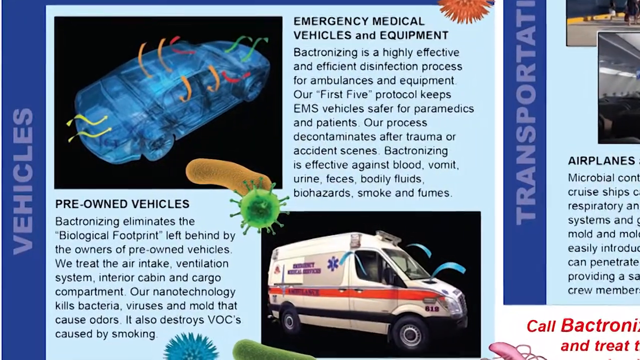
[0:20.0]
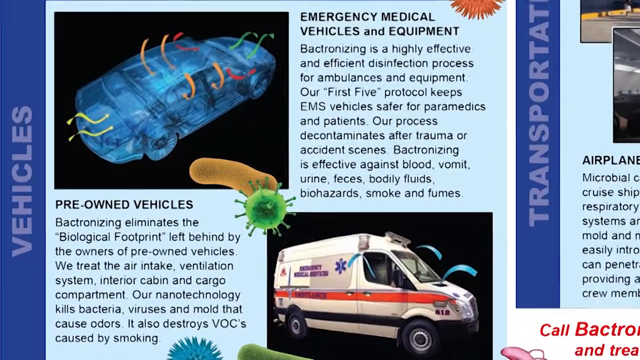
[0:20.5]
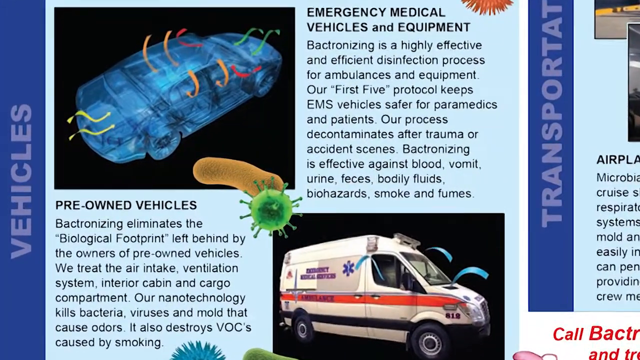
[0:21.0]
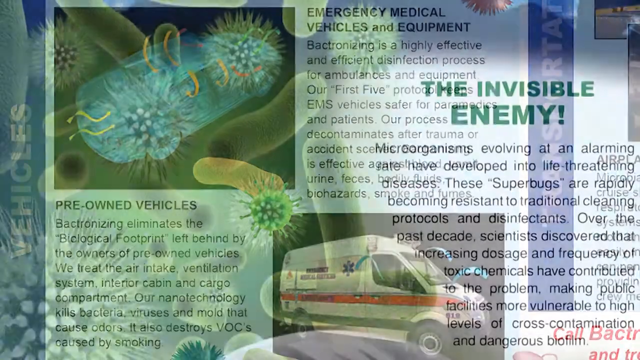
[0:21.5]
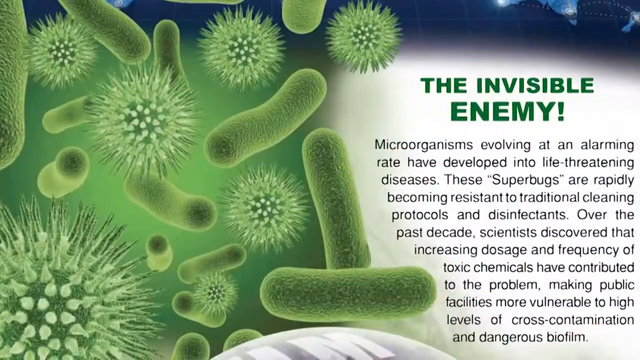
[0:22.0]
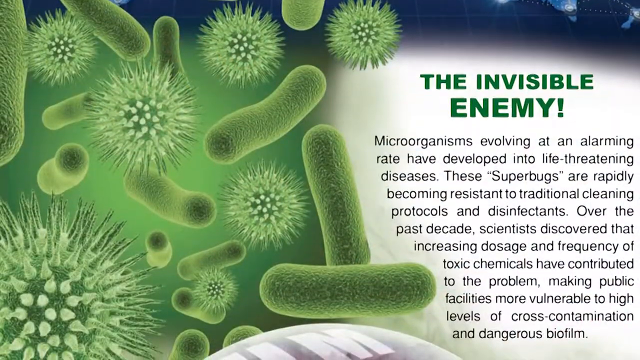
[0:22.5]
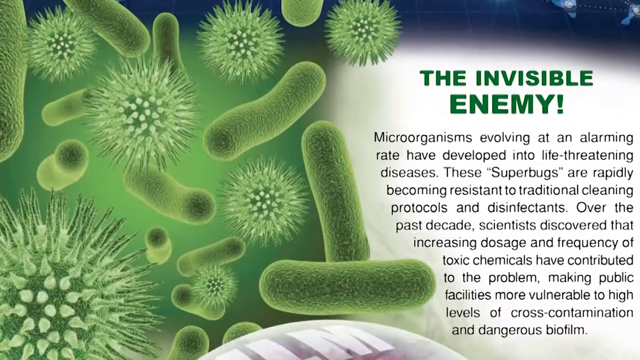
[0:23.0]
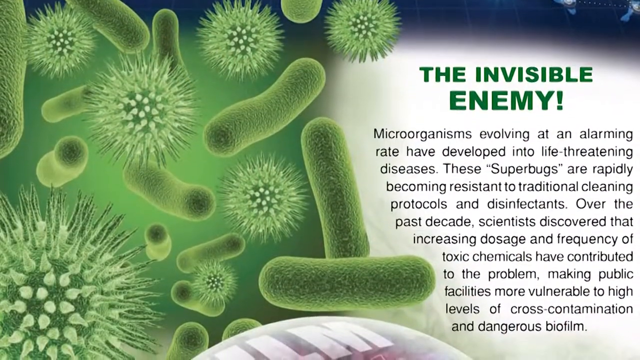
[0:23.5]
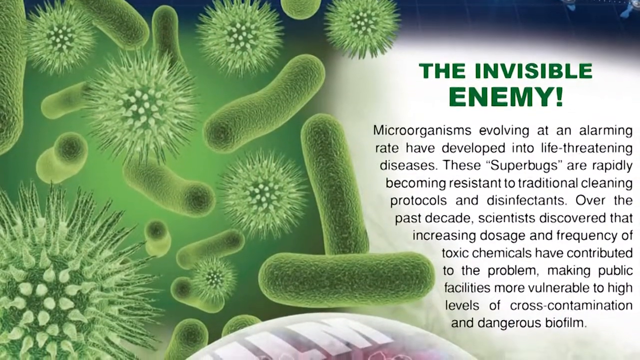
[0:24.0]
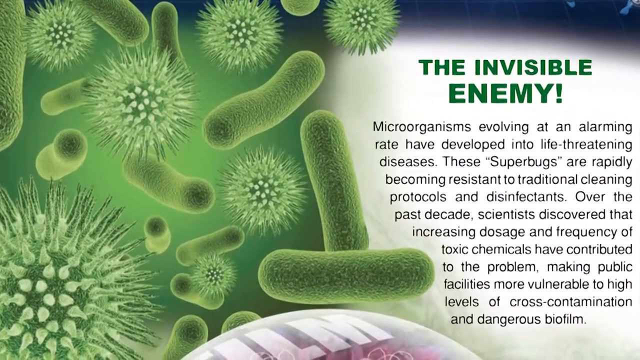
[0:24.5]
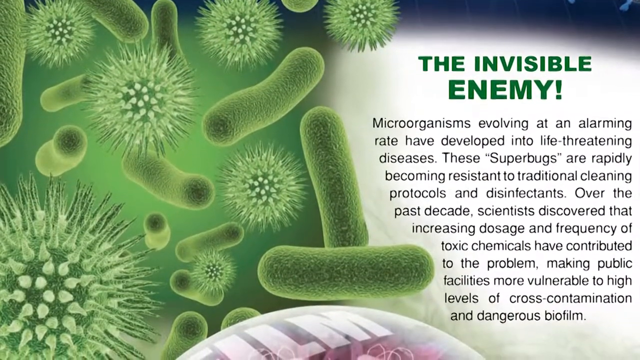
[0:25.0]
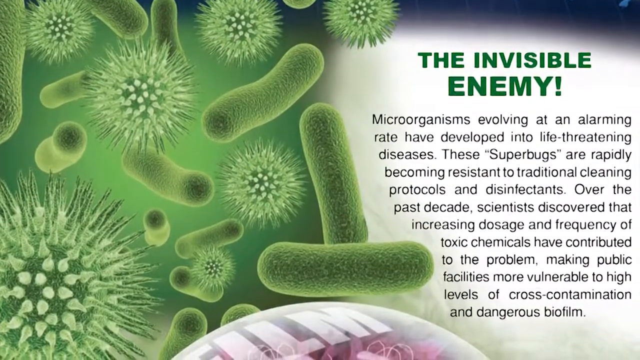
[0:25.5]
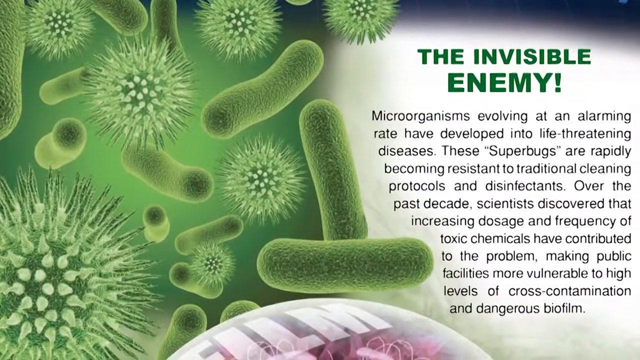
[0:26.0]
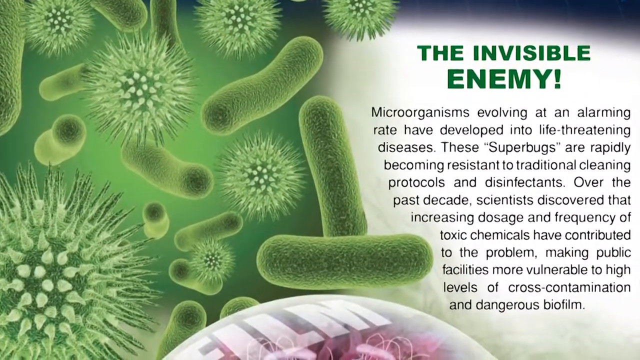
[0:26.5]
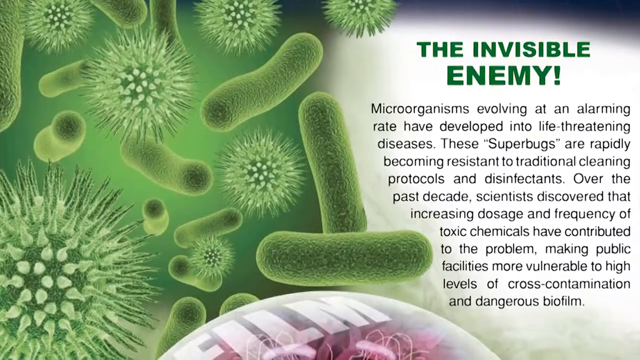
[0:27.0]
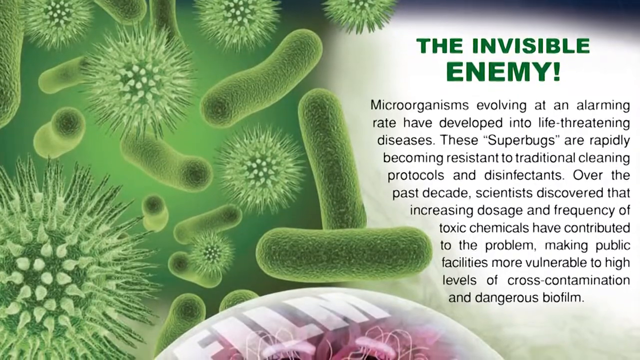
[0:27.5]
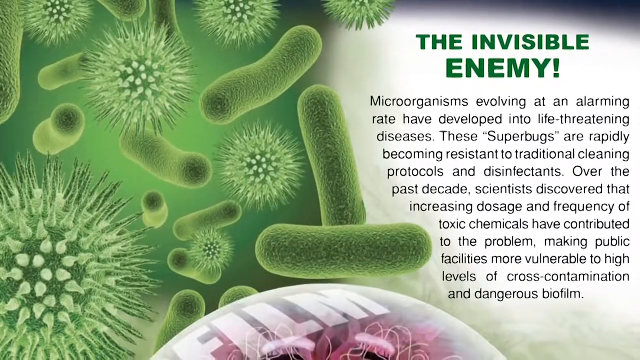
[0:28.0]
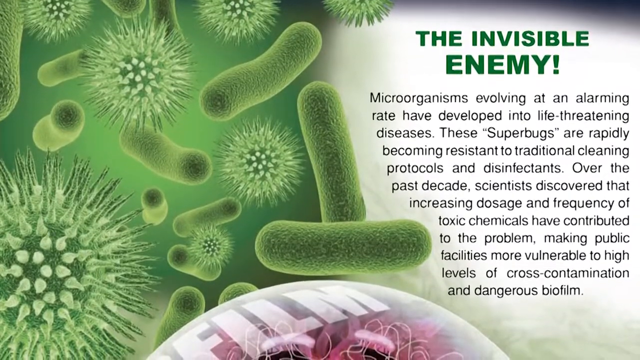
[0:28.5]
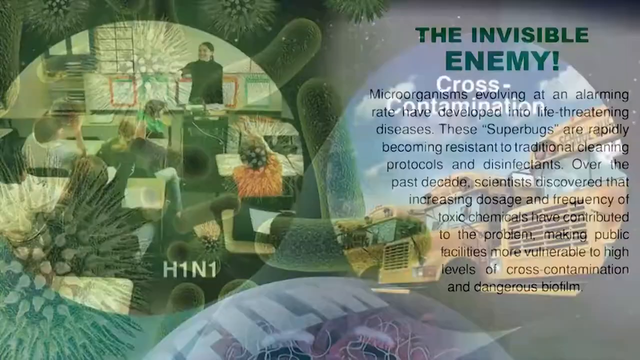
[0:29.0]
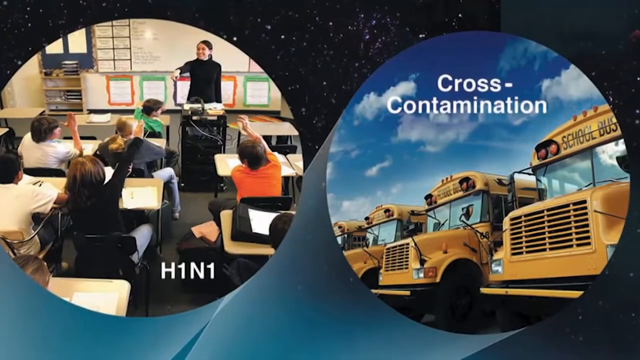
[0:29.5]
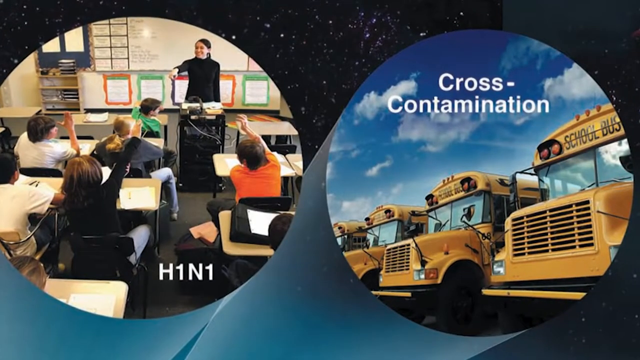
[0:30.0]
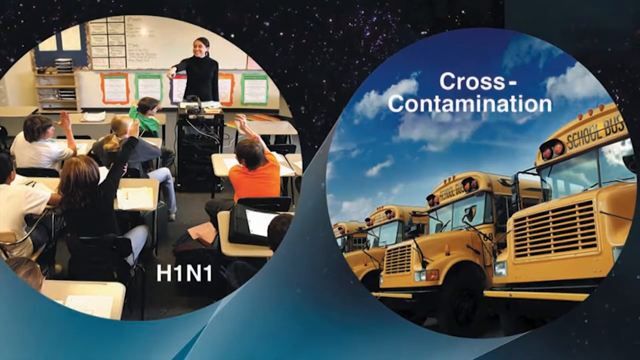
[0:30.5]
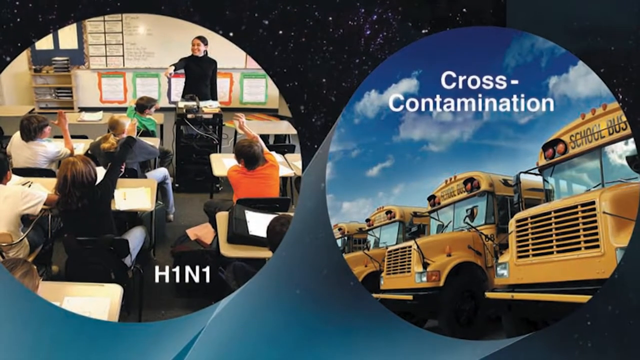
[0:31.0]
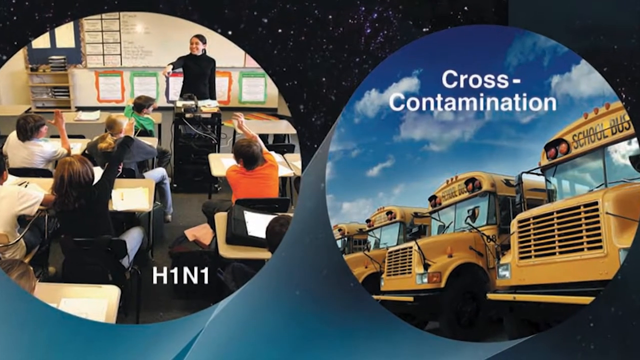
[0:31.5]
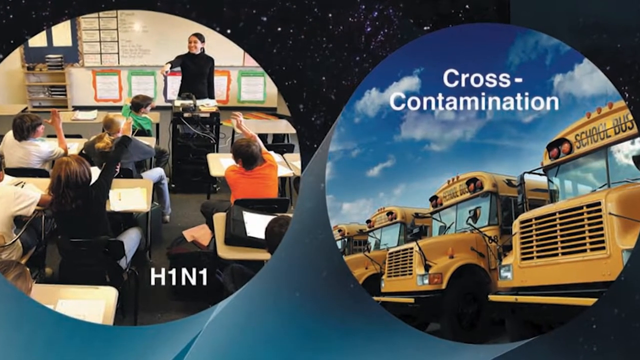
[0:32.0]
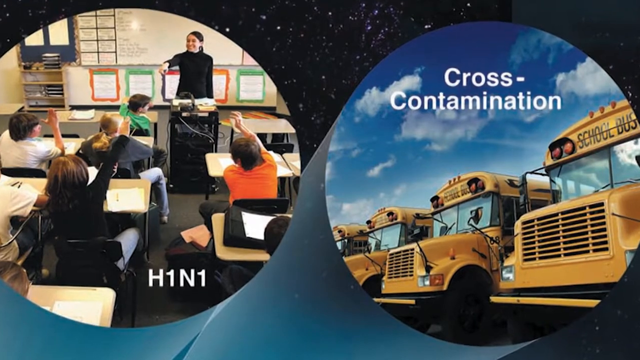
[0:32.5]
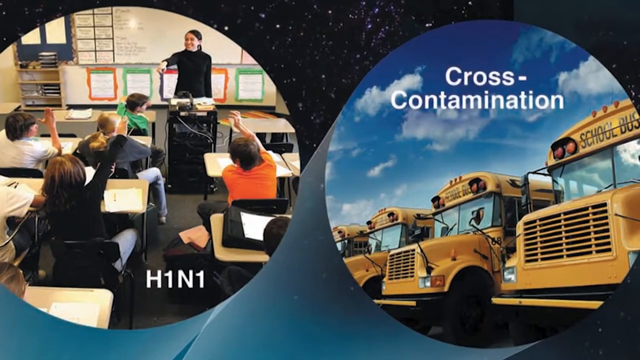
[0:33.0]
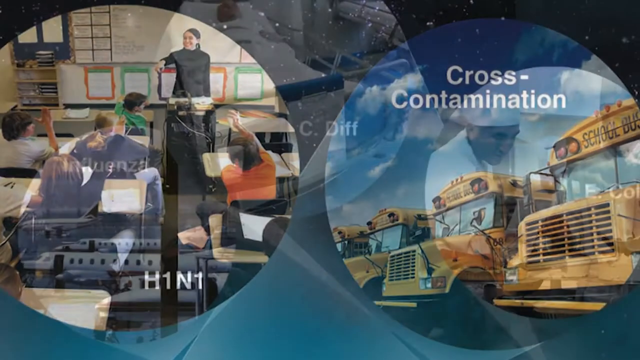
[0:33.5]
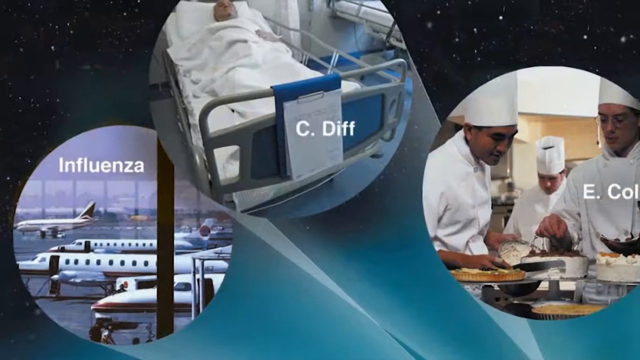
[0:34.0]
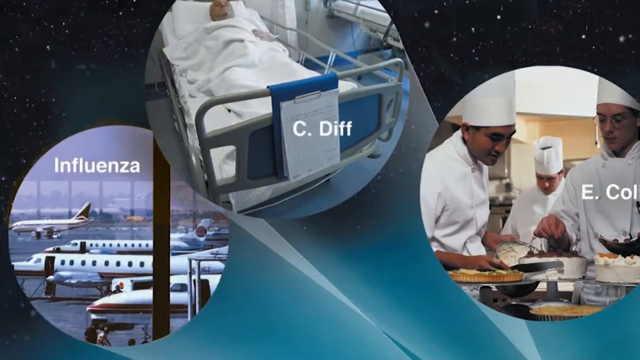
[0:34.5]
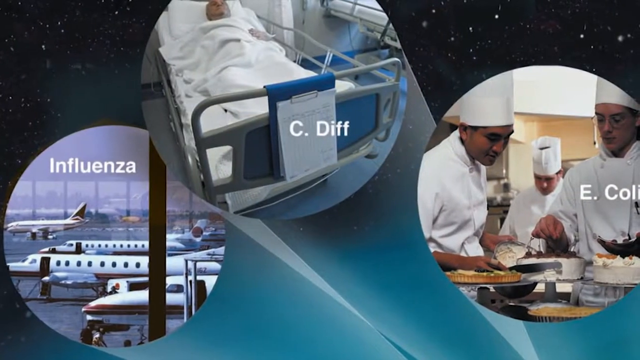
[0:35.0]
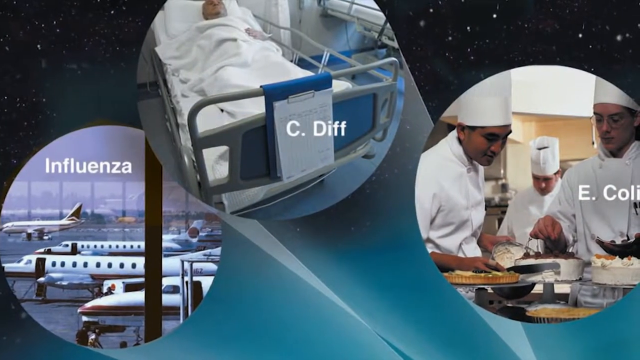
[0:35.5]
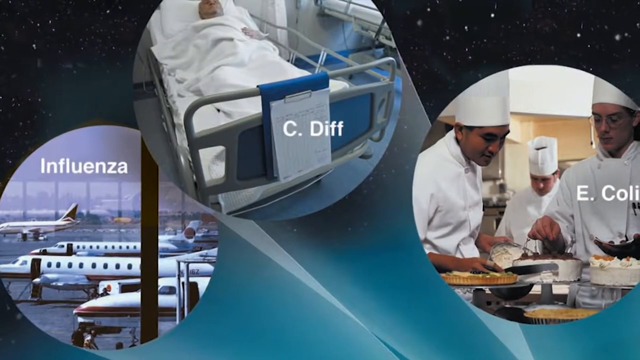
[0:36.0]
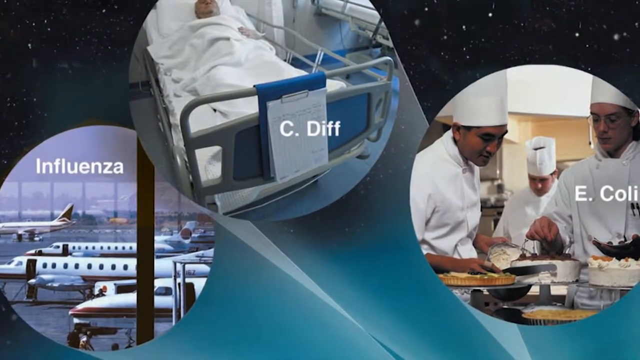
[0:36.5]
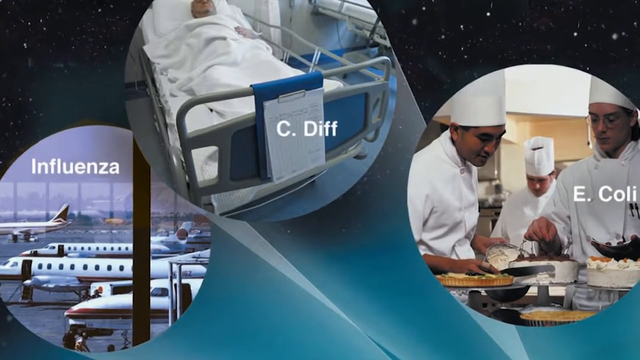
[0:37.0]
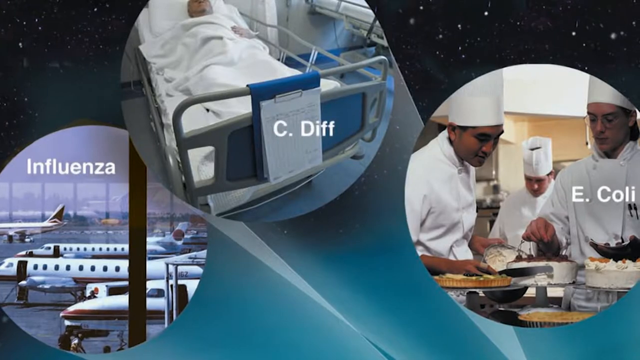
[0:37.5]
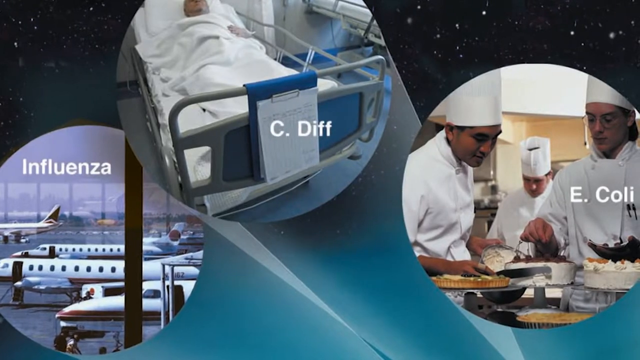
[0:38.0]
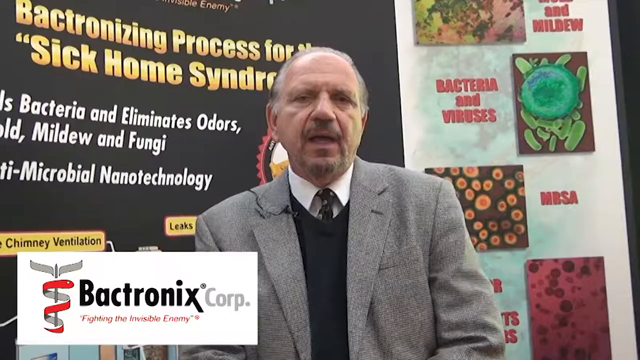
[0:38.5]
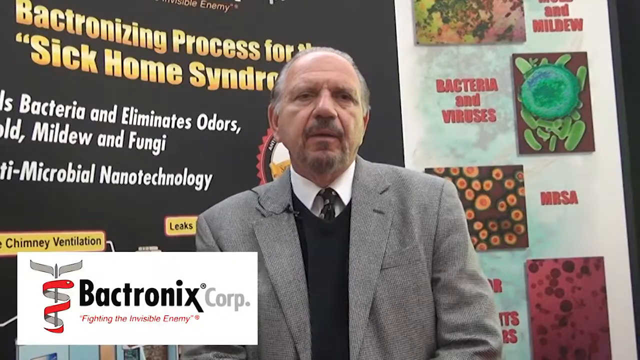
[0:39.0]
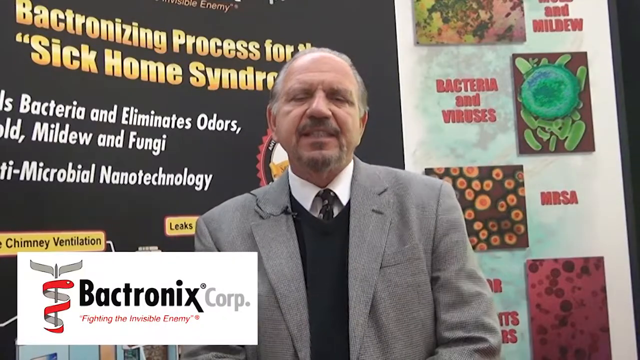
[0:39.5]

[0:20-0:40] What looks like promotional material for a cleaning process shows what it can clean. A graphic of a blue car appears above text that says "pre-owned vehicles," with a graphic of an ambulance below, and illustrations that look like germs or bacteria in between. The camera zooms in on this, then switches to a similar page with a header reading "The Invisible Enemy" and green illustrations of what look like bacteria and mold spores on the left. Text below the header explains what microorganisms and superbugs are. Next, a graphic shows two circles with photographs: the left one shows a classroom with the text "H1N1" at the bottom, and the right one shows a line of school buses with "cross-contamination" in it. A similar page shows three photograph circles with text labels: airplanes on a tarmac labeled "influenza," a person in a hospital bed labeled "C. diff," and, on the right, three chefs in a kitchen labeled "E. coli."